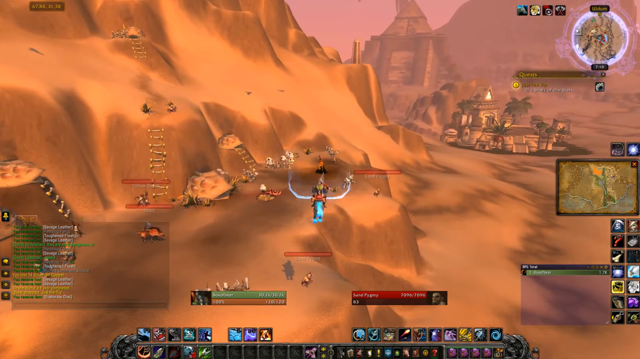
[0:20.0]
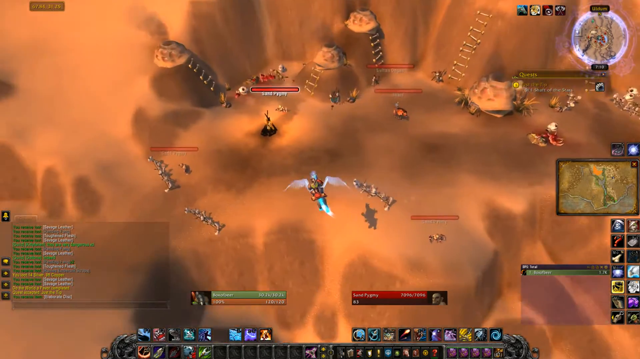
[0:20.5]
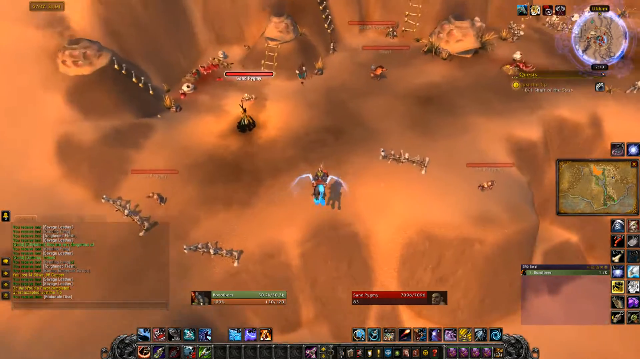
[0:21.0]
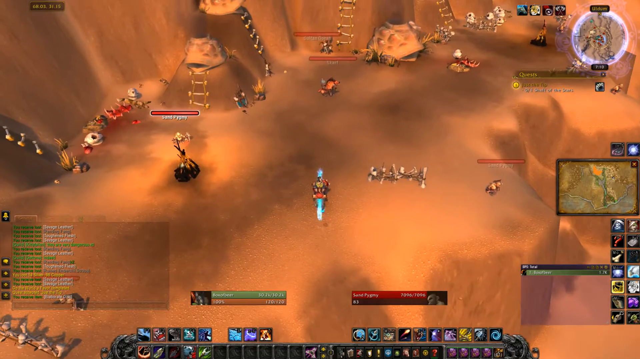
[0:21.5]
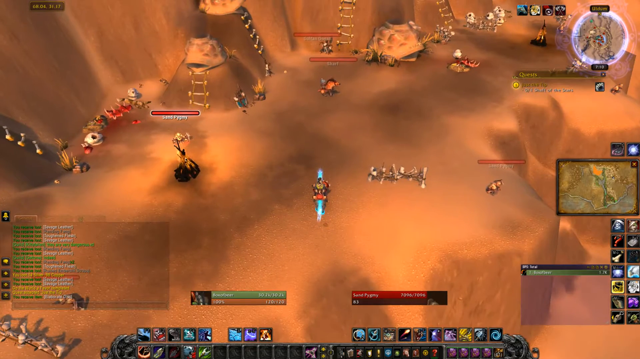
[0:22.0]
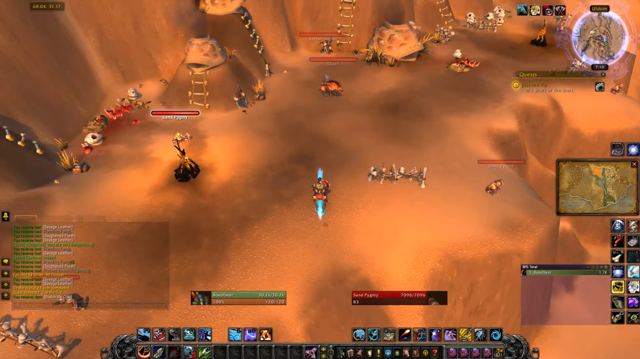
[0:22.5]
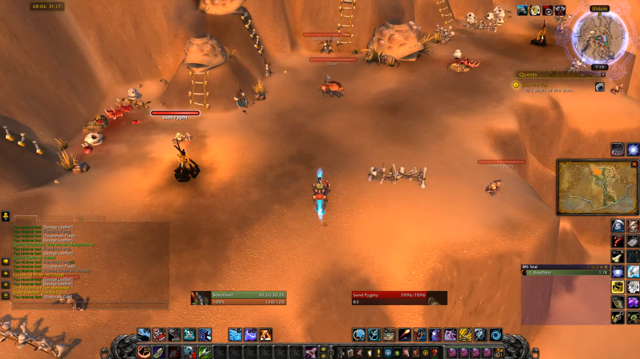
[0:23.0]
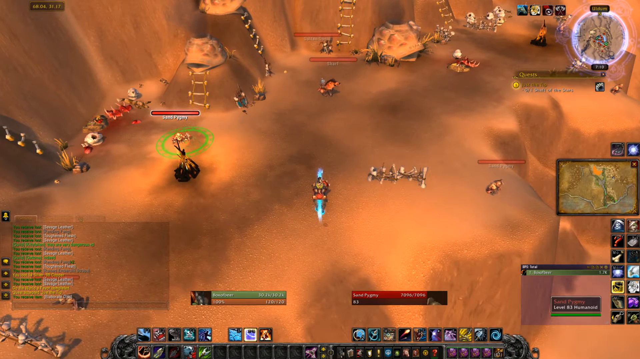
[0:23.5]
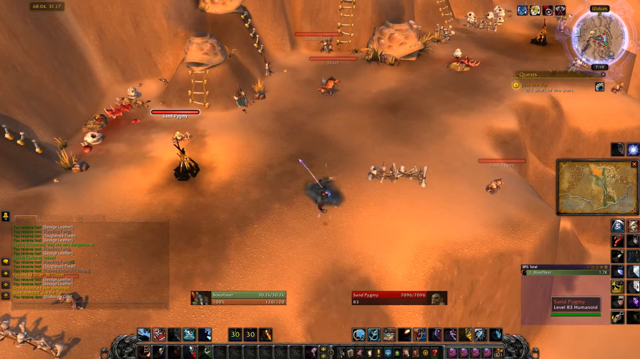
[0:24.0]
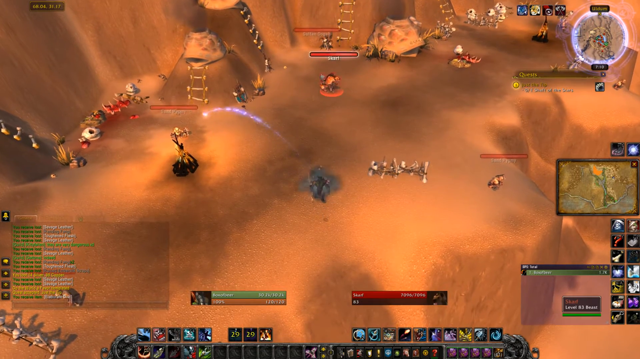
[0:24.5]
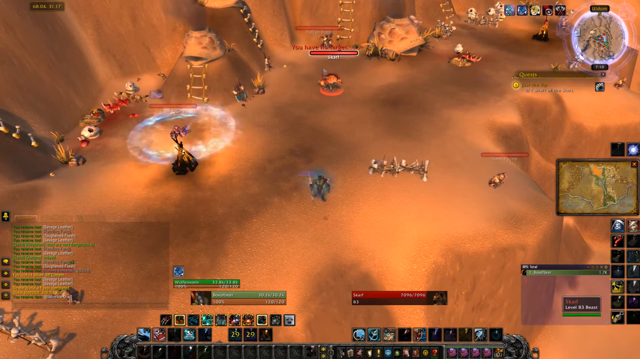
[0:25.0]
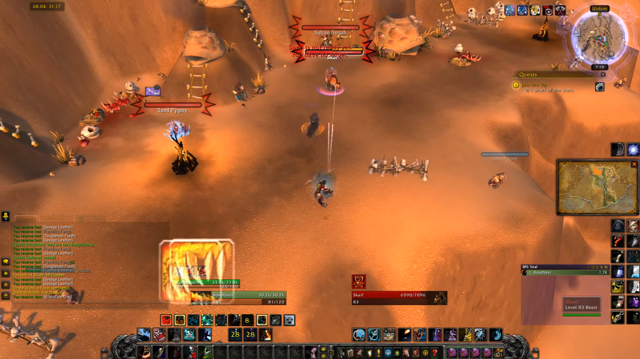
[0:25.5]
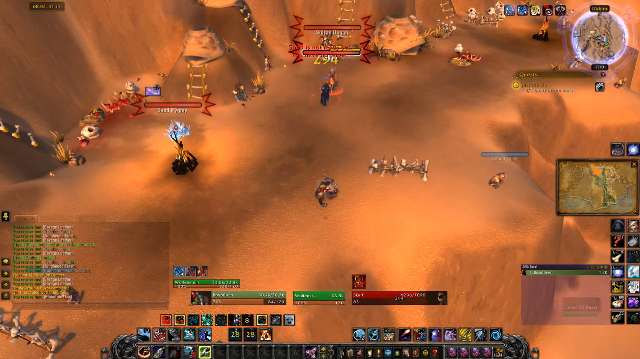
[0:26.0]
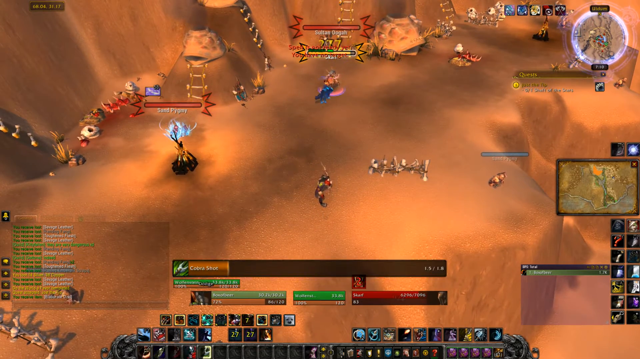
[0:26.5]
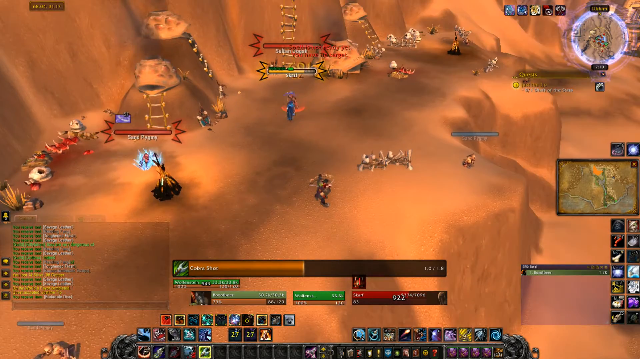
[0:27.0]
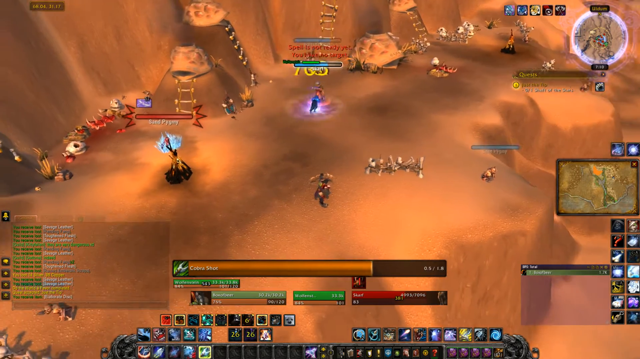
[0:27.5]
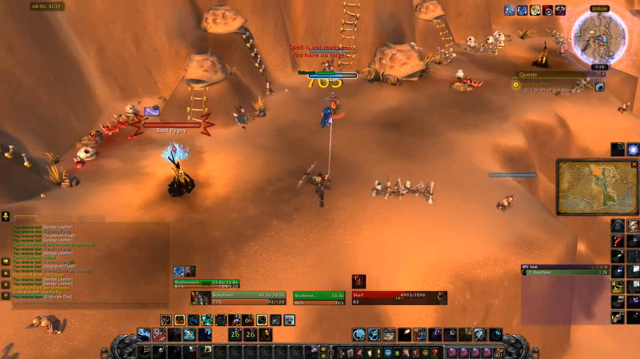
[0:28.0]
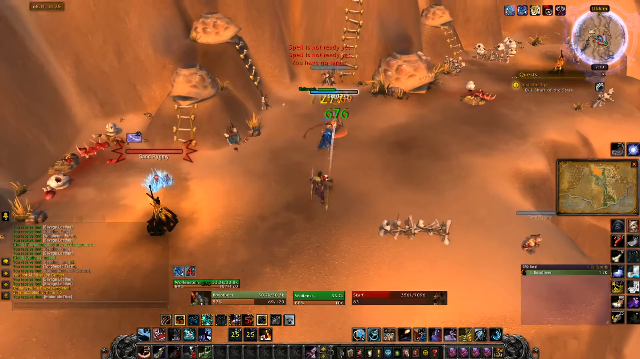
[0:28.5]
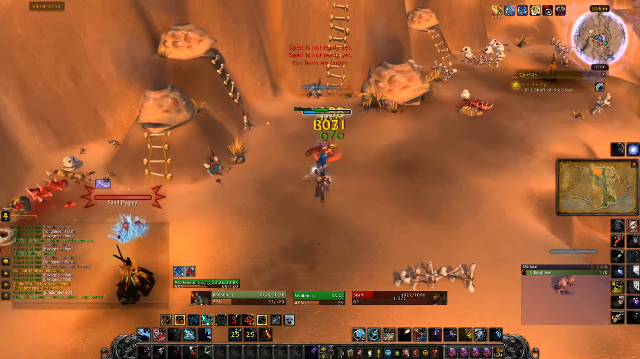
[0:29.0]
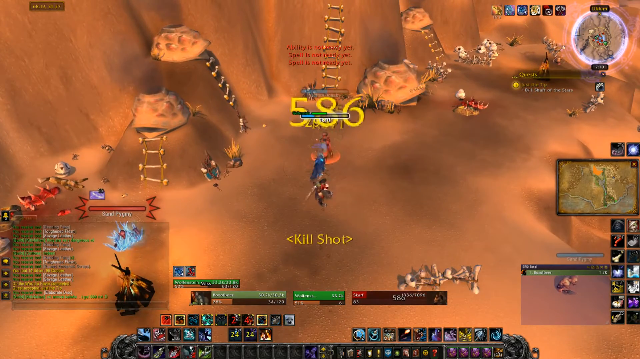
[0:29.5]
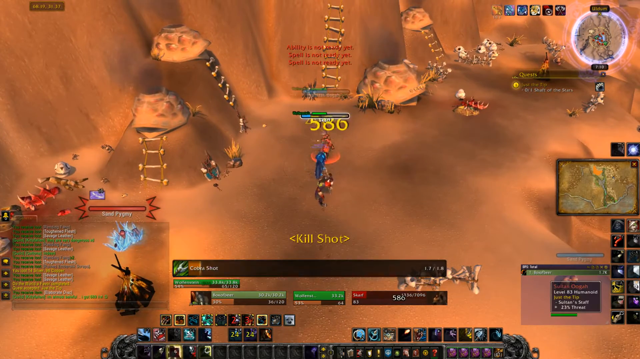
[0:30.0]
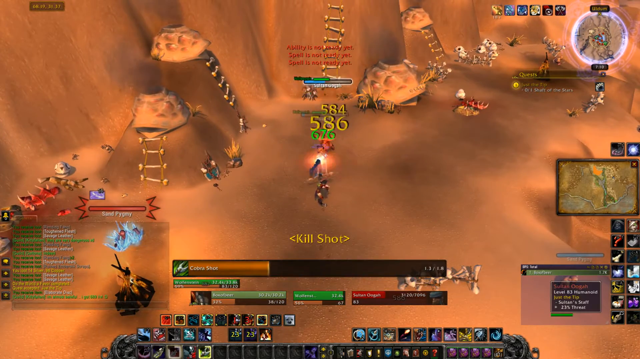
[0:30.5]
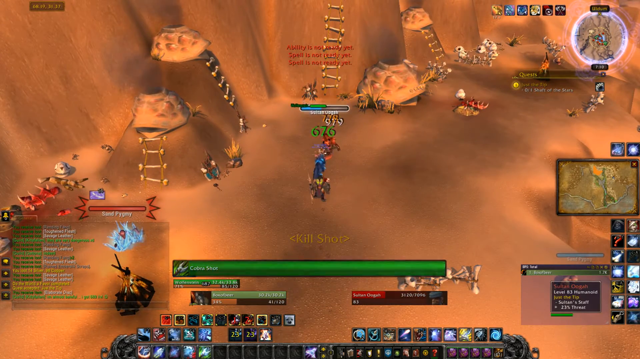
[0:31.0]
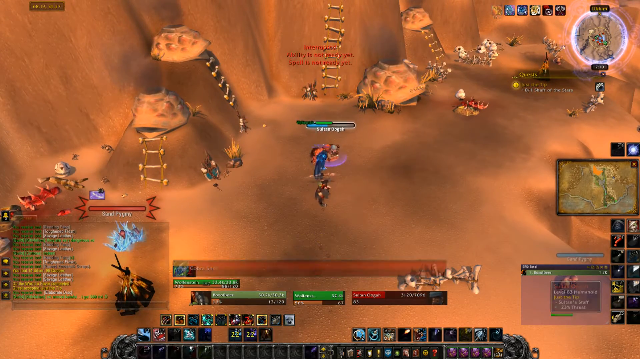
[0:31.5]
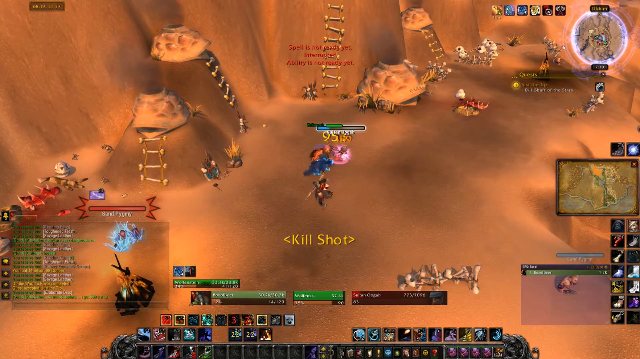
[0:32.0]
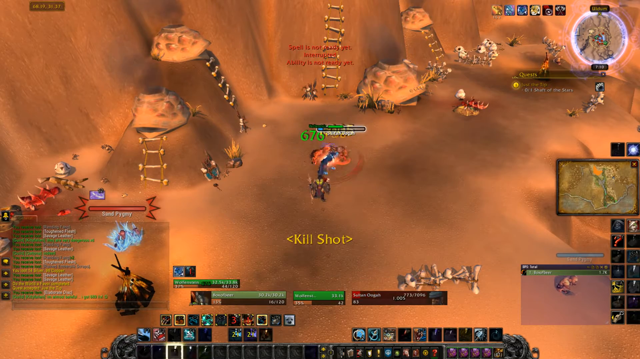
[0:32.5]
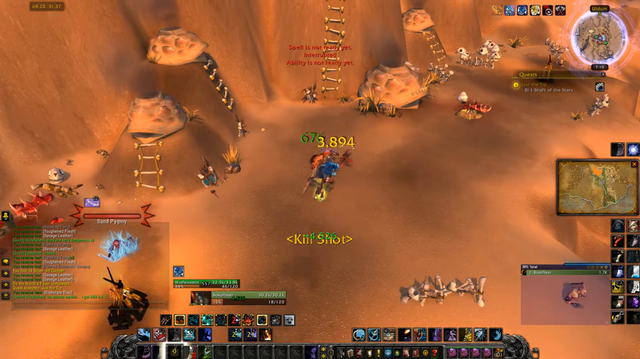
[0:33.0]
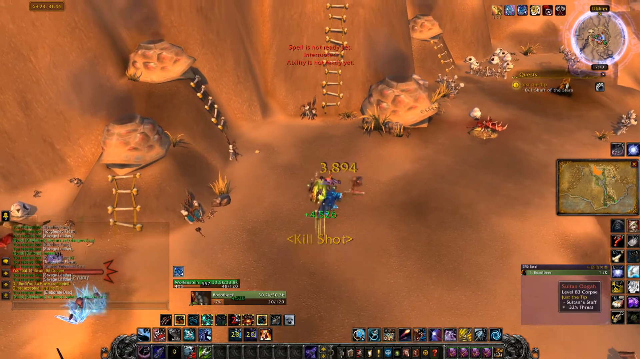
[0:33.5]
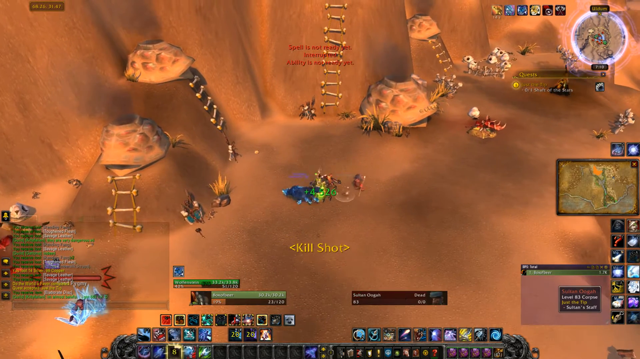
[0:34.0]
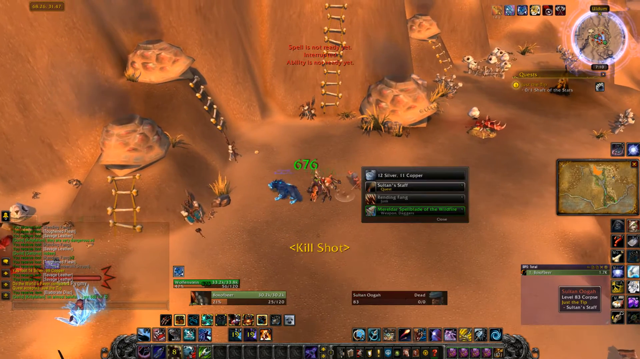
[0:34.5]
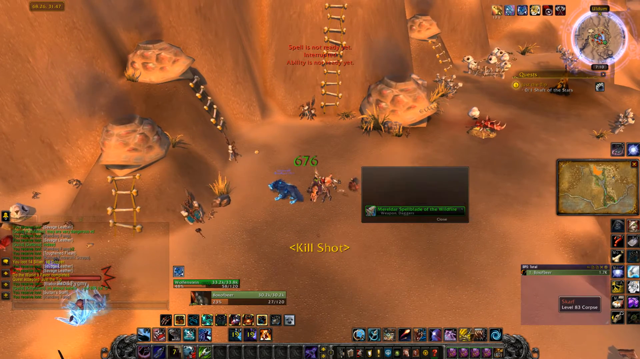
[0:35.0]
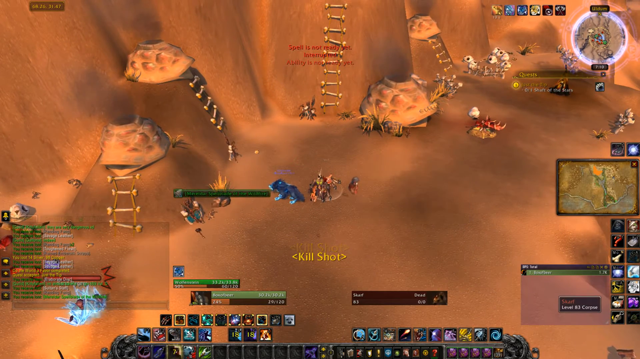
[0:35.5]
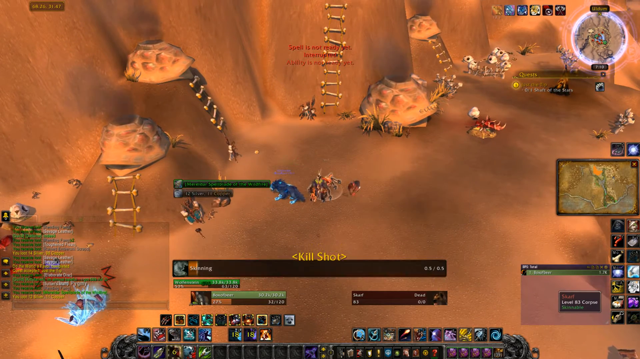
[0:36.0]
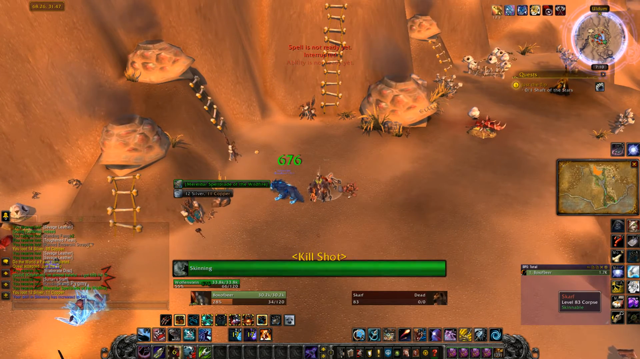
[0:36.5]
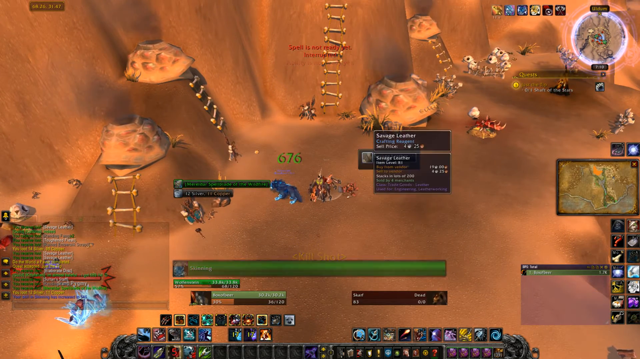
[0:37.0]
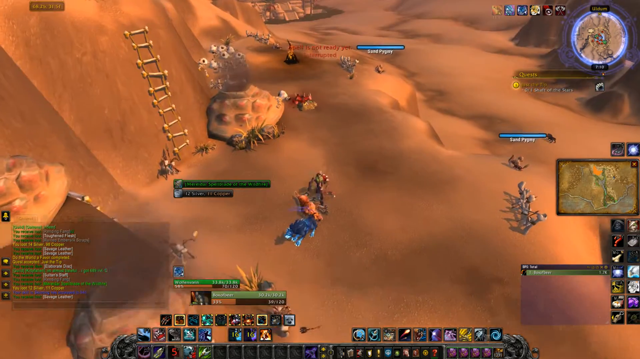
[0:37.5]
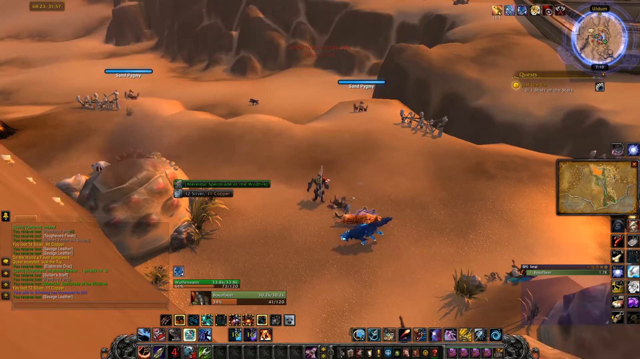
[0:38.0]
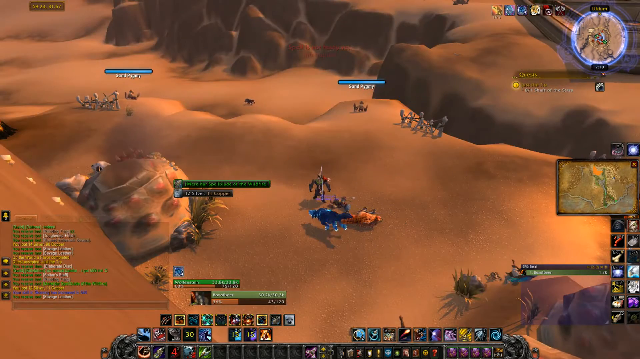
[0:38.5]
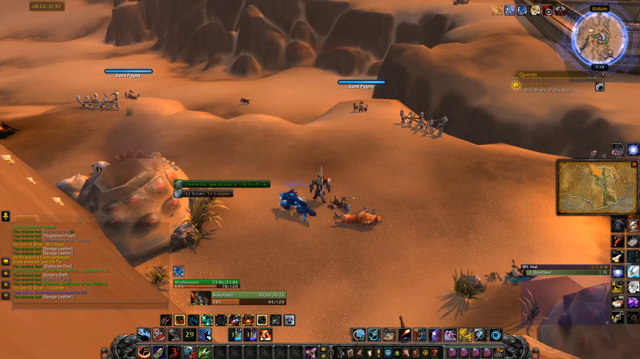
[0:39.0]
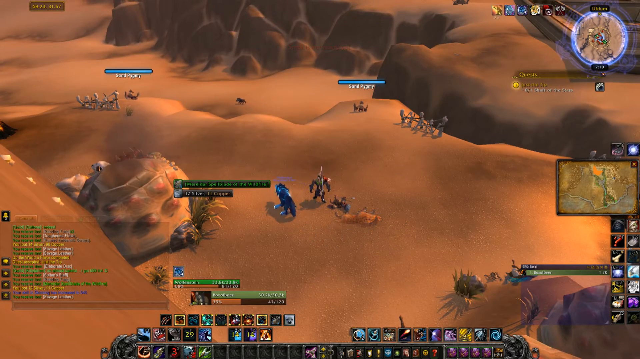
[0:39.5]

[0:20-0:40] The mythical creature flies over the city and lands in an area that looks like a mountainside. He instantly begins combat with the inhabitants of the mountainside. The flying animal he was riding on gallops around on the mountainside. Several mountains are in the background, along with some palm trees, and there is a rope ladder on the mountainside; it looks like the inhabitants have been working to make the mountainside inhabitable. The mythical creature comes down and starts shooting them, killing them one by one, and seemingly kills each of the inhabitants where he landed. In the lower left corner are two chat boxes, where maybe the players of the game are chatting with each other. The bottom middle portion of the screen shows that two players are playing the game.